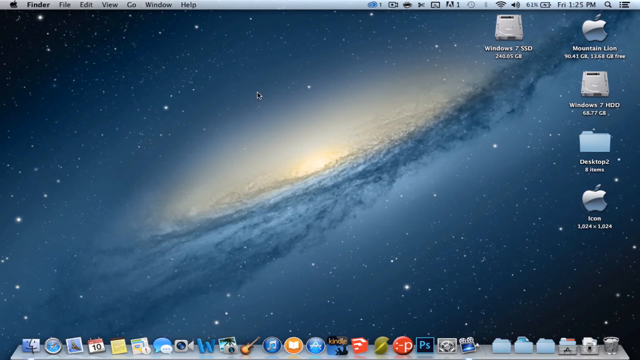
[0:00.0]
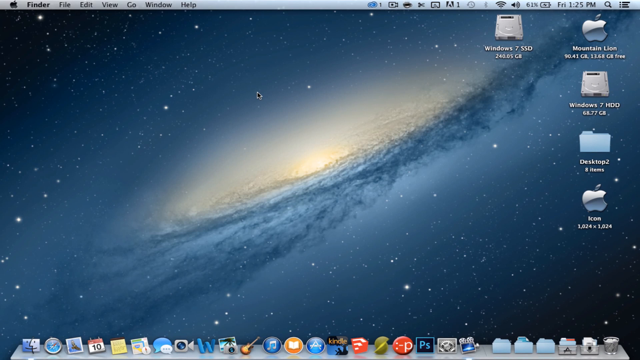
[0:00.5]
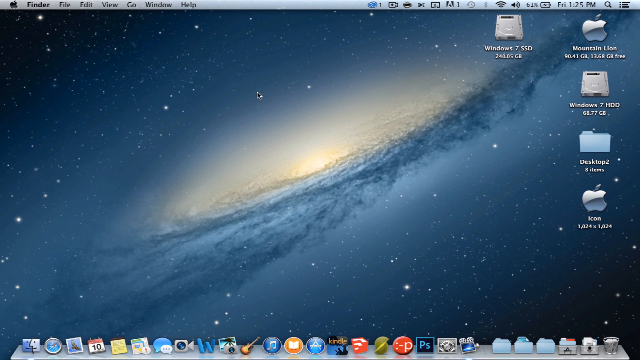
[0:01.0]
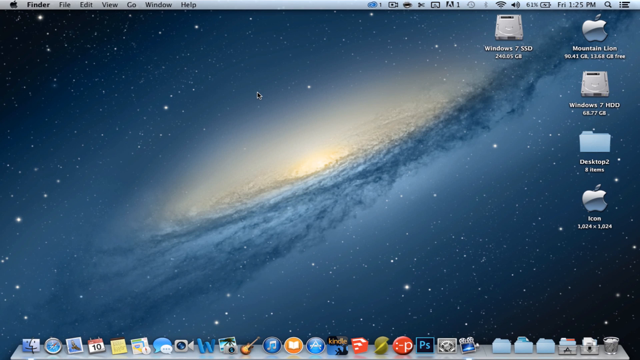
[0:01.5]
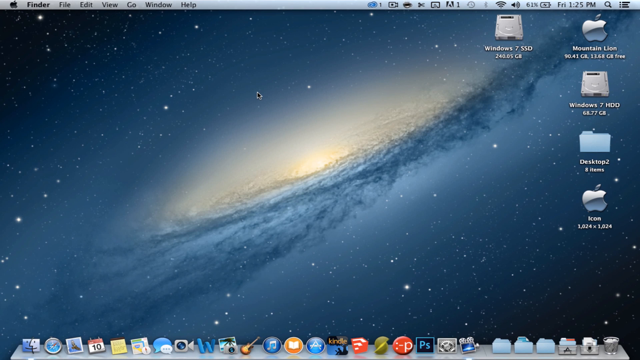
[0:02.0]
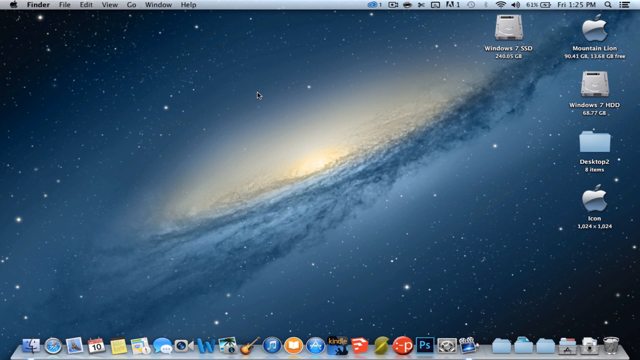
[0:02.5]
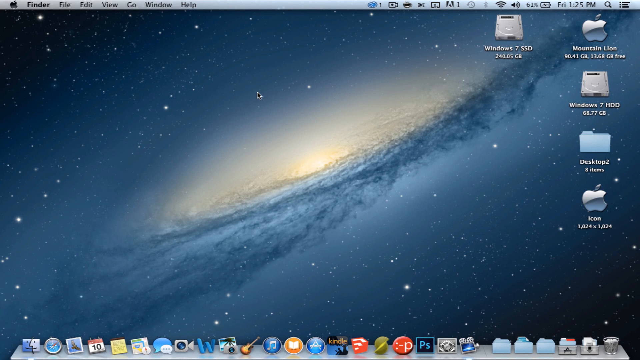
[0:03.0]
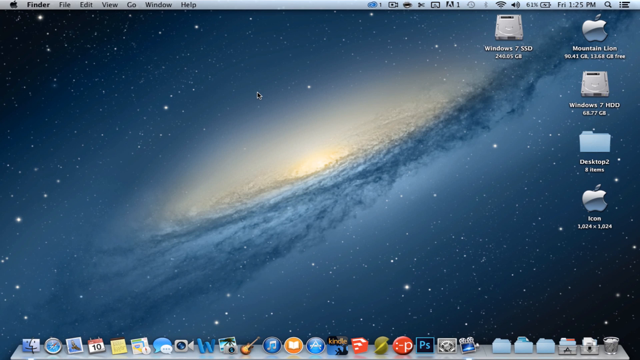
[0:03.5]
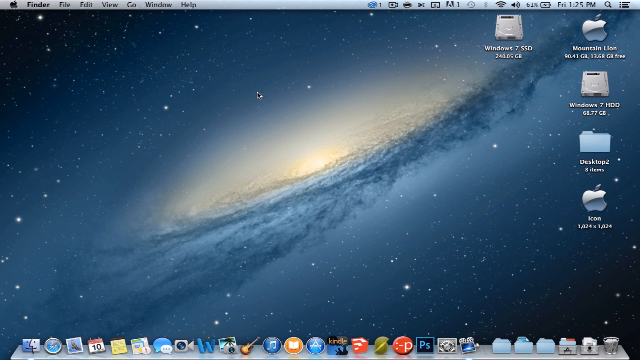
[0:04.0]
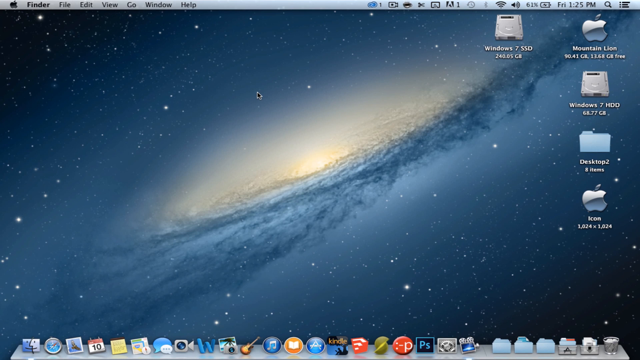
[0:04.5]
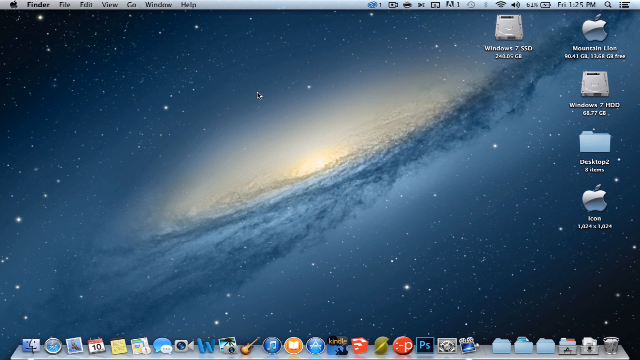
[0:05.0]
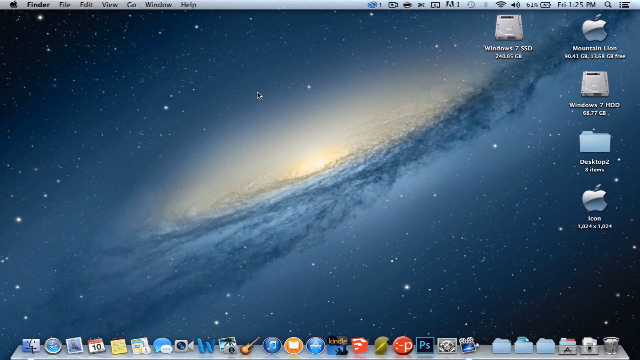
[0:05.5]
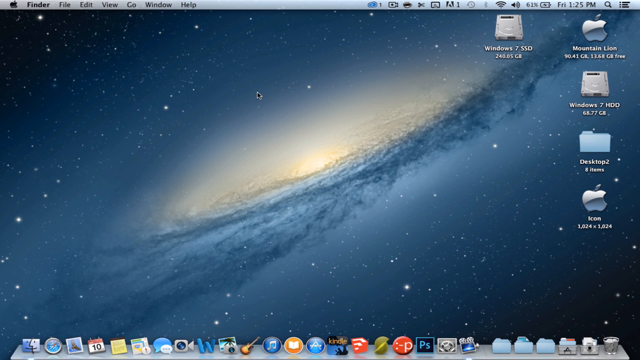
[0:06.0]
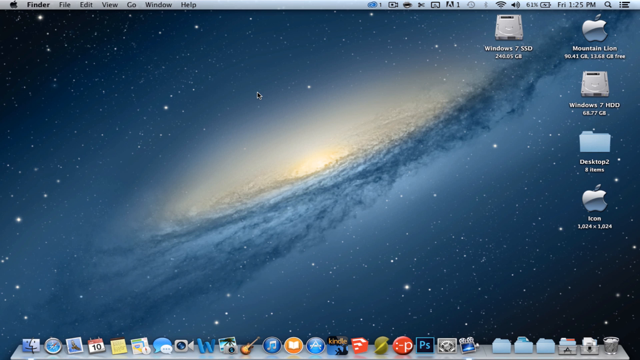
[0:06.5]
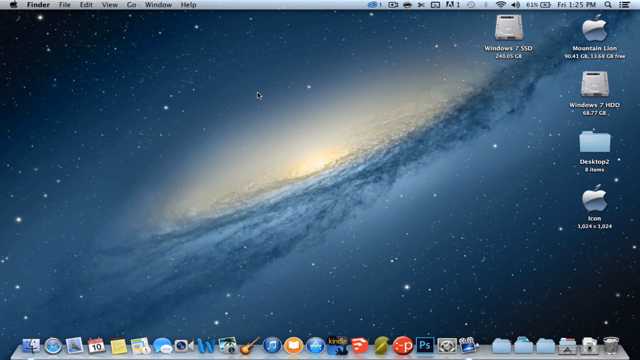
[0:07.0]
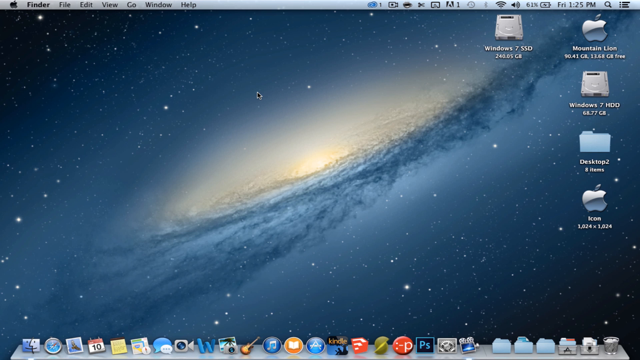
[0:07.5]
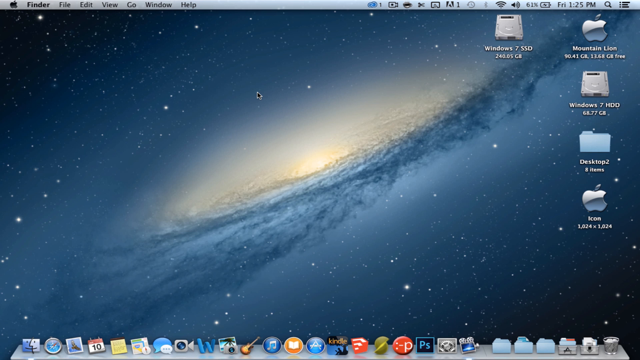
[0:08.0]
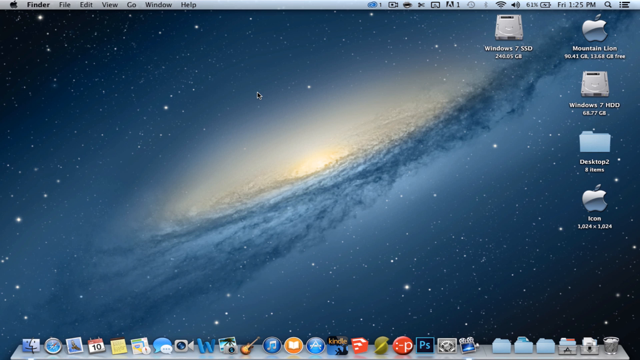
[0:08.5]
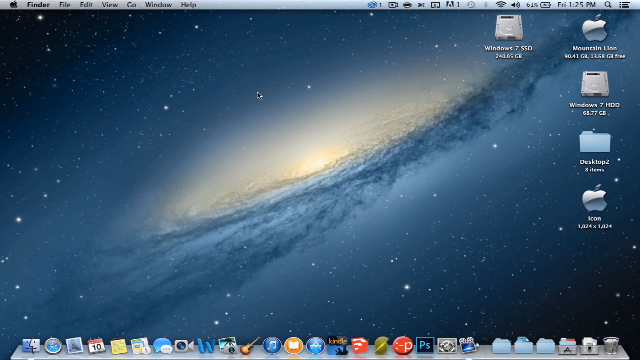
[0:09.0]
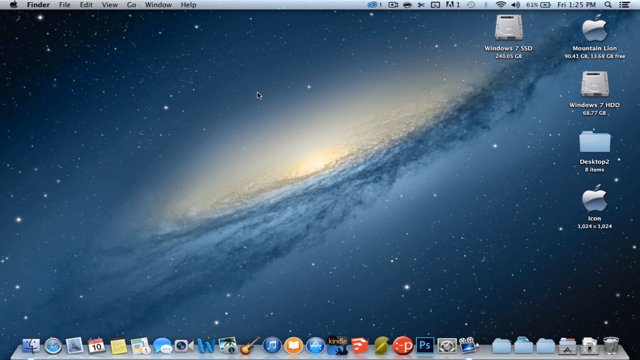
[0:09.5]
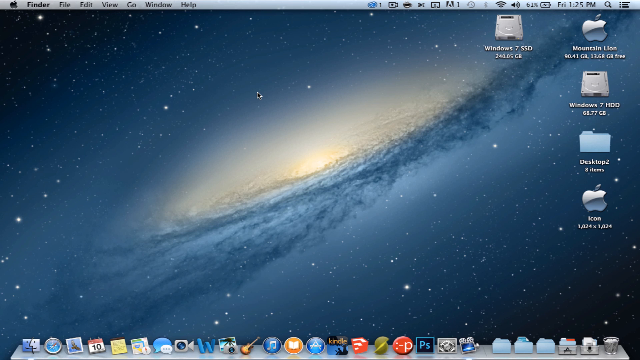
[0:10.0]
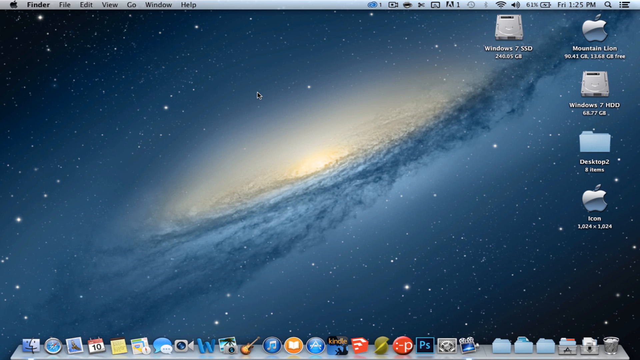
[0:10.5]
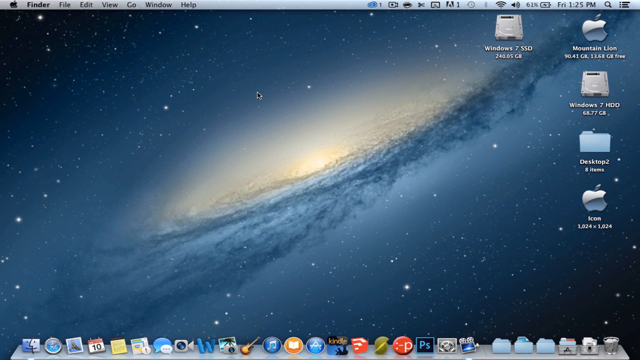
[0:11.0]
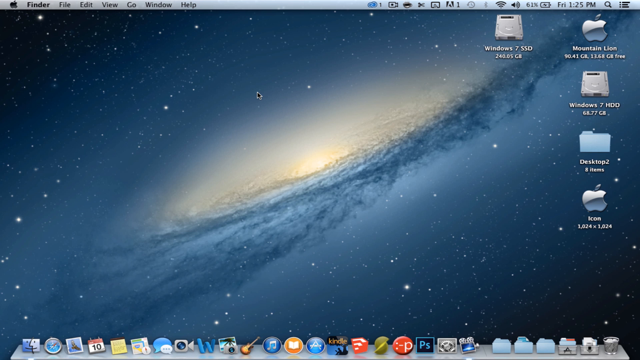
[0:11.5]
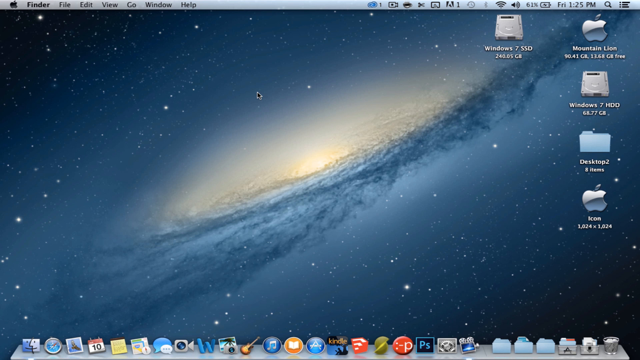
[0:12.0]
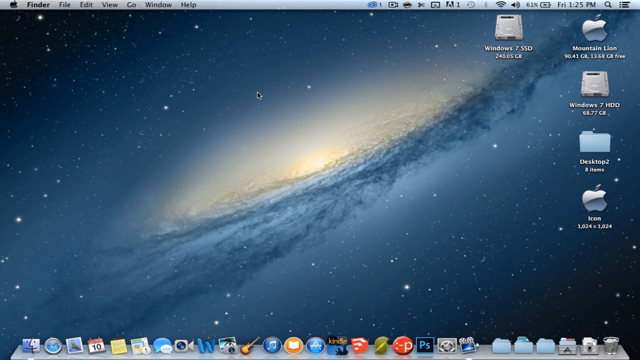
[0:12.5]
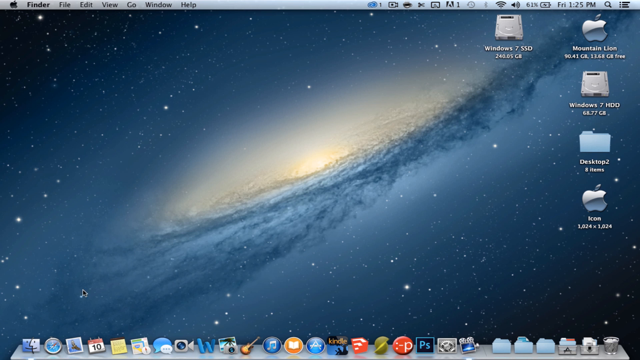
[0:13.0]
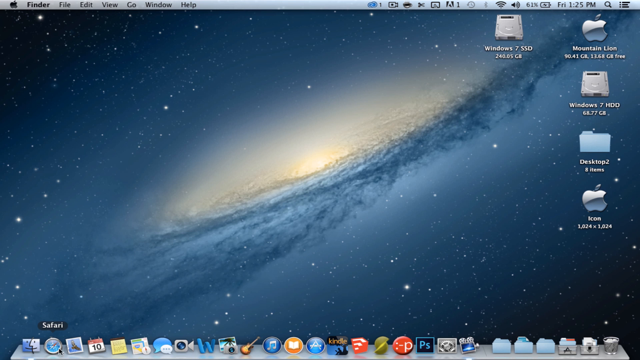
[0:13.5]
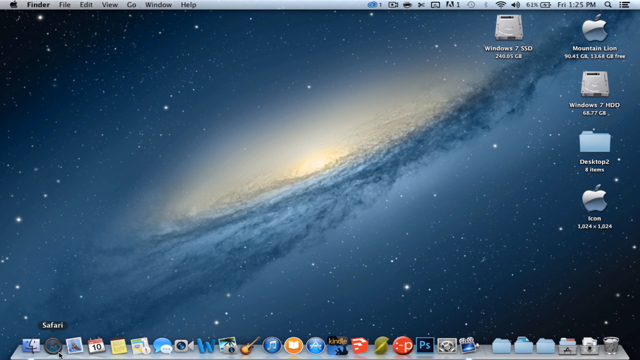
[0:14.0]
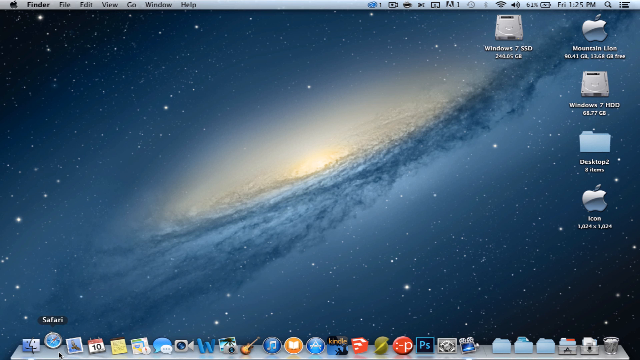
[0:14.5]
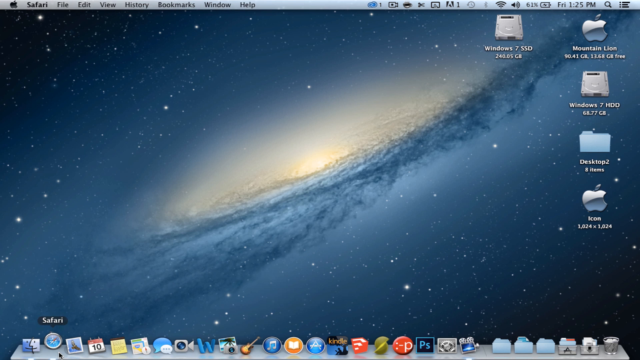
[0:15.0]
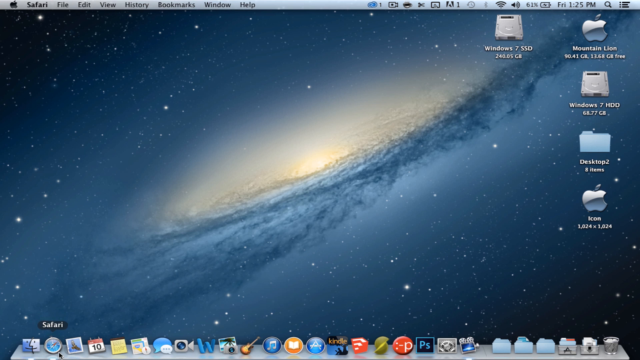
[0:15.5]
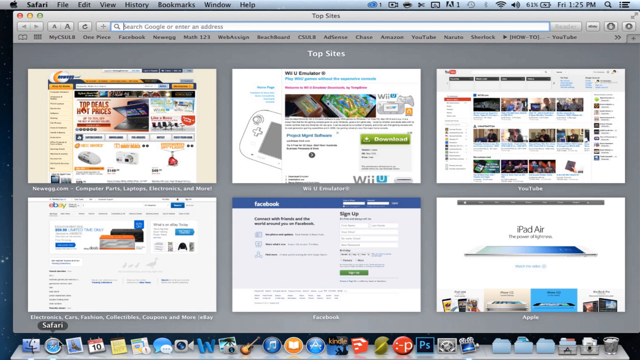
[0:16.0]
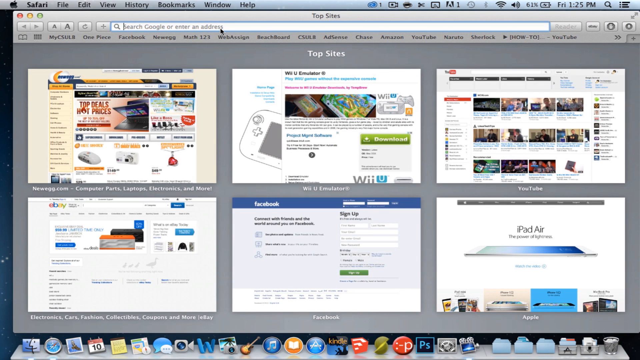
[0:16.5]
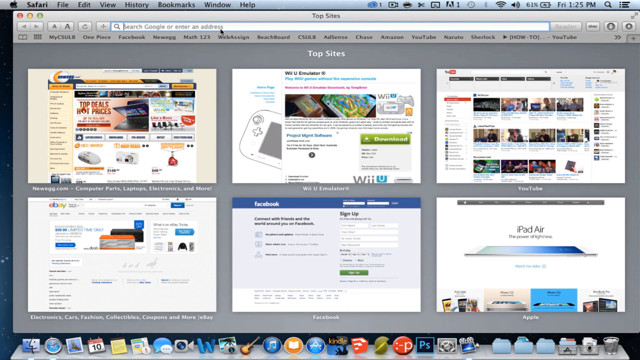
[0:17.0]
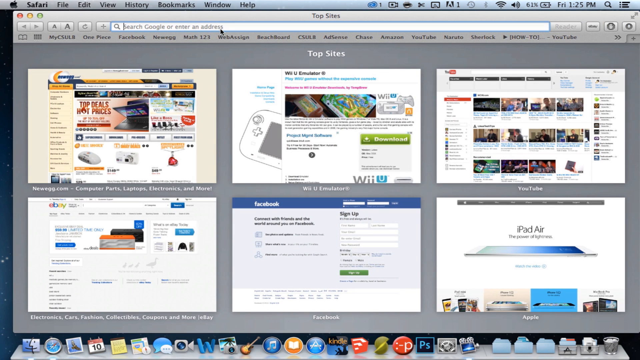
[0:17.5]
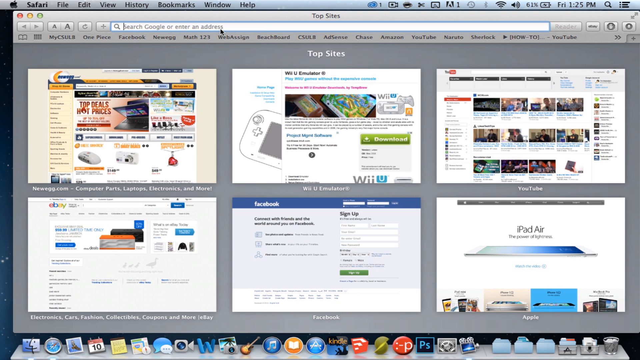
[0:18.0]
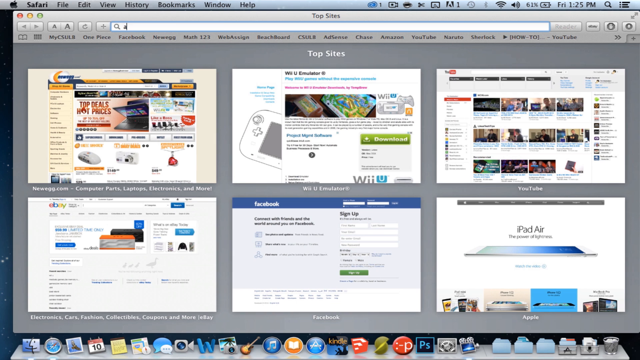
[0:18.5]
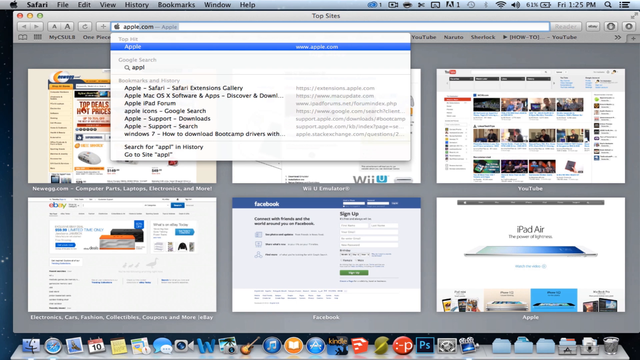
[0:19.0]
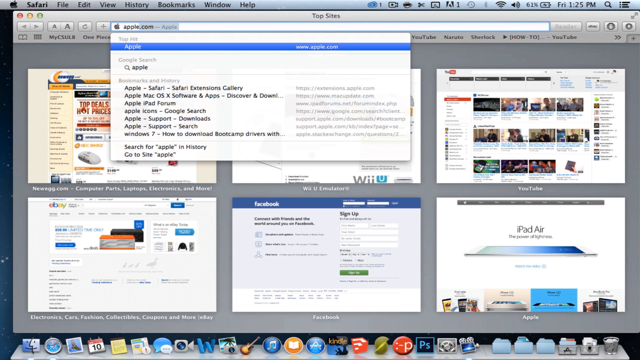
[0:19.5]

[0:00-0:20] A MacBook desktop with a blue galaxy-themed wallpaper appears. It looks like a macOS setup, but several parts seem reminiscent of older systems. At the top right are folders labeled "Windows 7", "Mountain Lion", "Desktop 2" and "Icon". Along the bottom of the screen is a fully loaded dock holding a wide range of applications. For several seconds the screen stays still with no activity. Then Safari is launched and opens to the Top Sites page, which shows popular websites such as Facebook, Newegg, YouTube, Apple and eBay. The user clicks into the address bar and types apple.com, and the browser apparently goes on to load the Apple homepage.